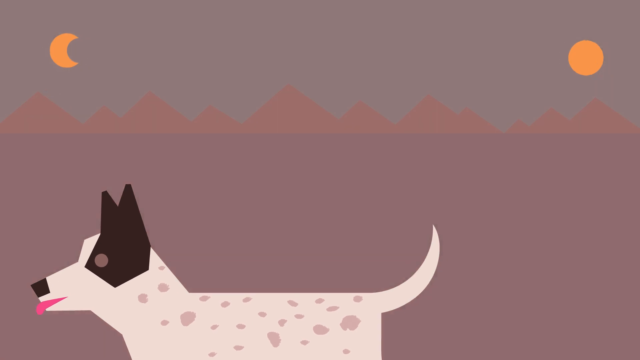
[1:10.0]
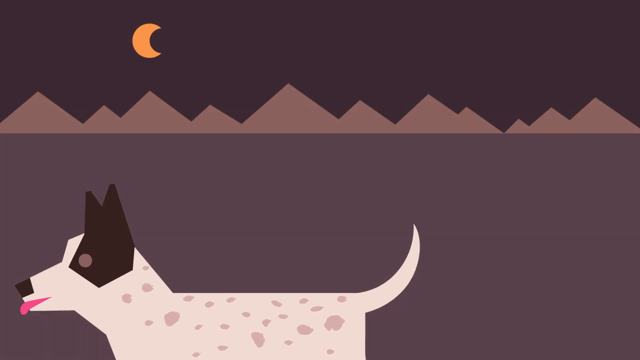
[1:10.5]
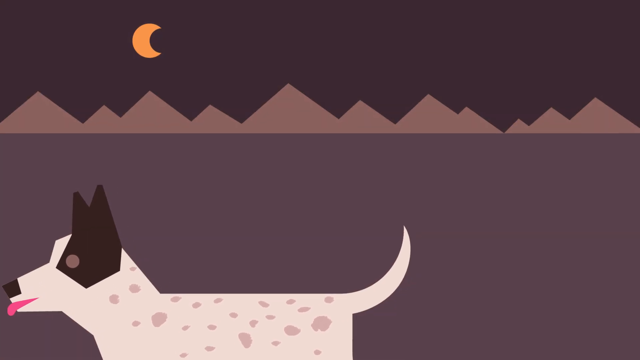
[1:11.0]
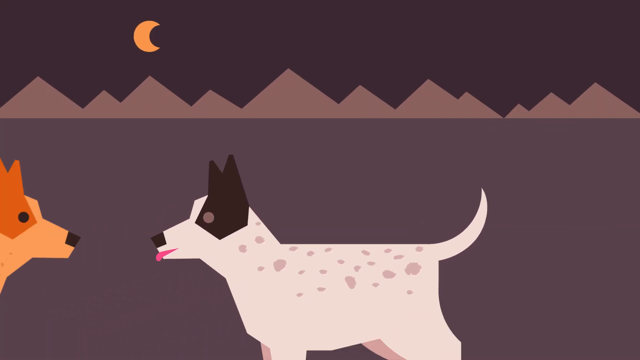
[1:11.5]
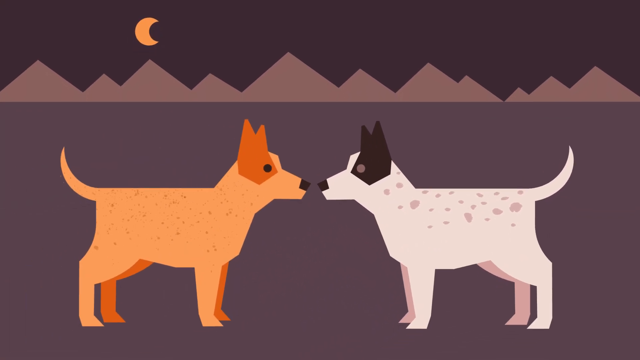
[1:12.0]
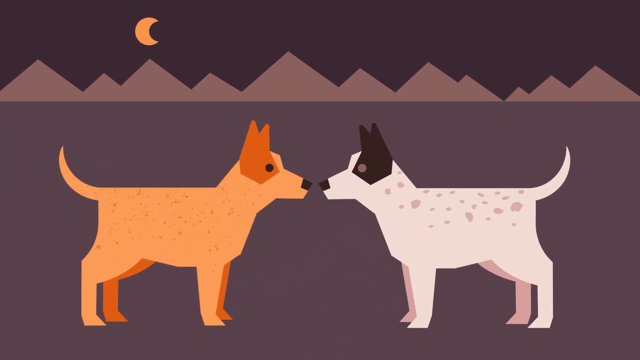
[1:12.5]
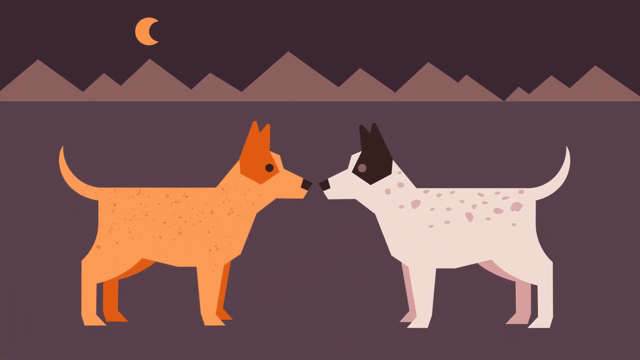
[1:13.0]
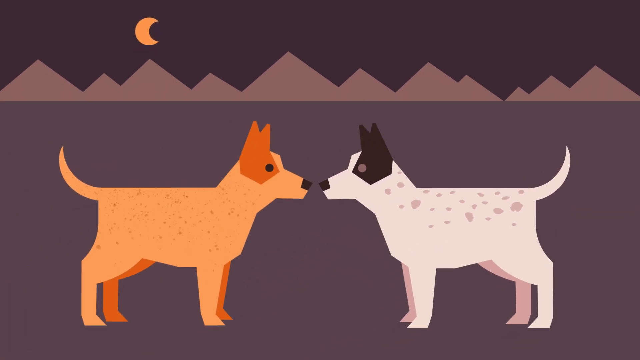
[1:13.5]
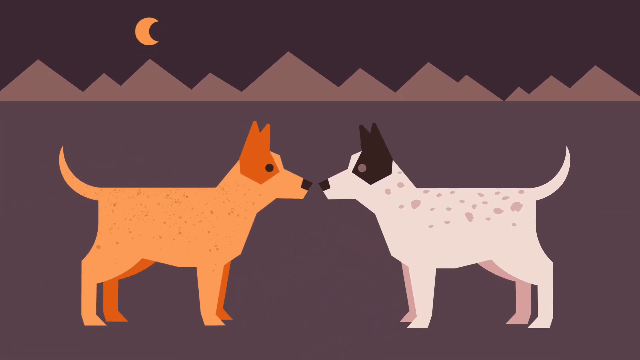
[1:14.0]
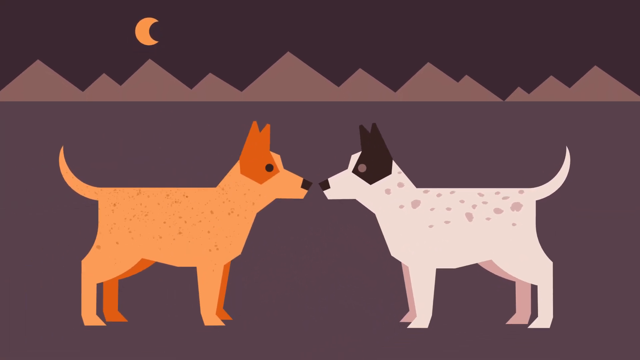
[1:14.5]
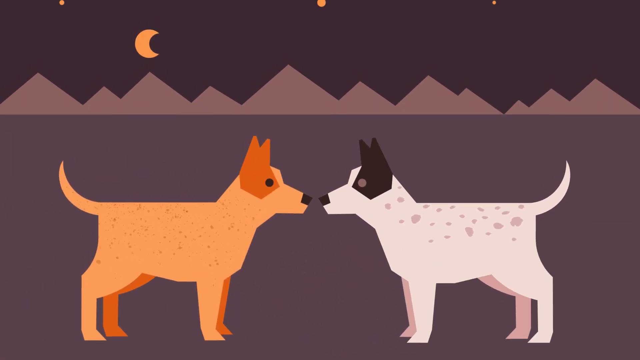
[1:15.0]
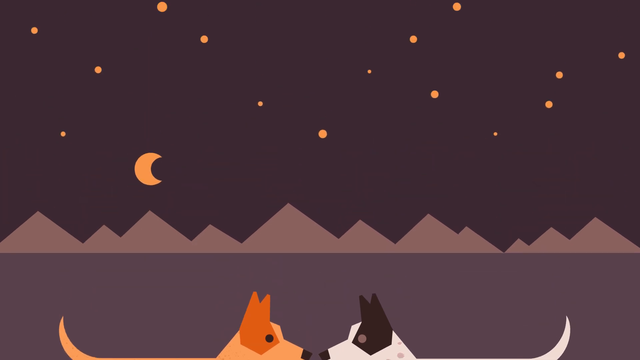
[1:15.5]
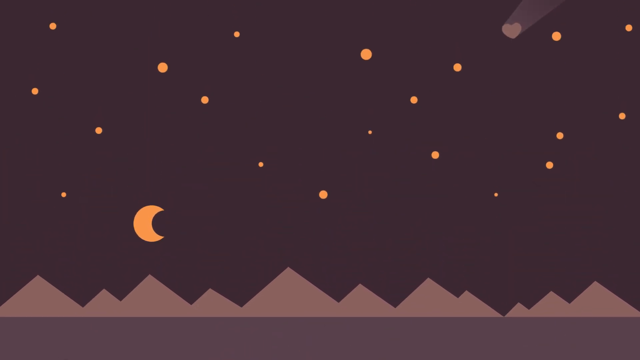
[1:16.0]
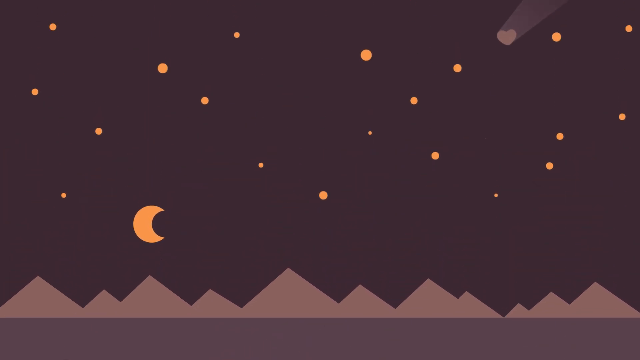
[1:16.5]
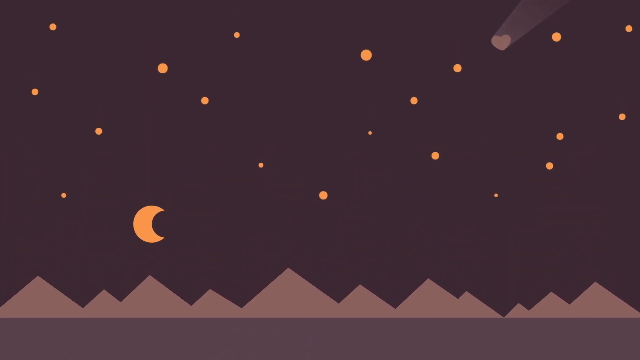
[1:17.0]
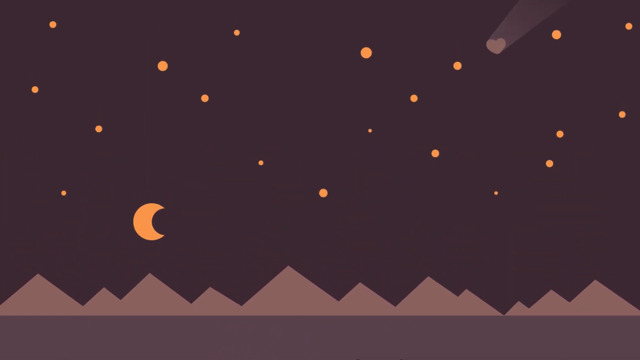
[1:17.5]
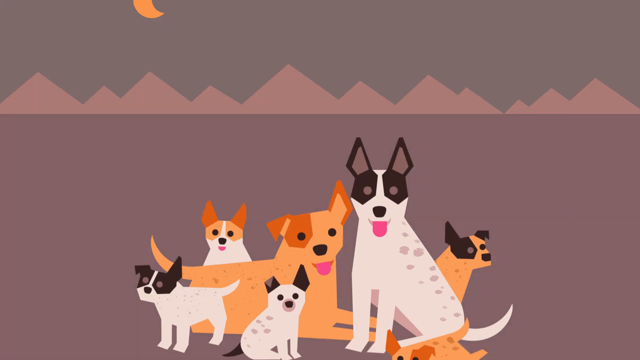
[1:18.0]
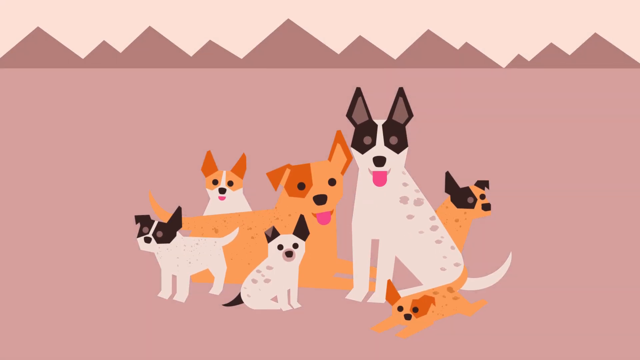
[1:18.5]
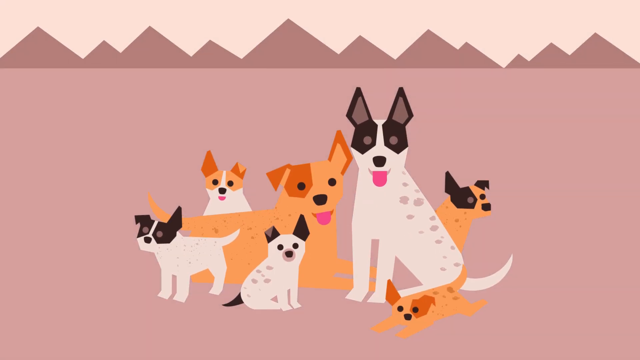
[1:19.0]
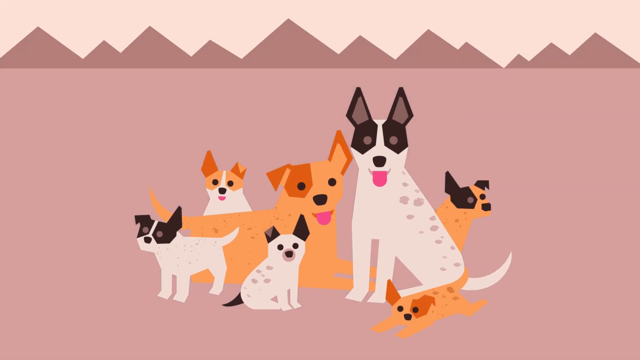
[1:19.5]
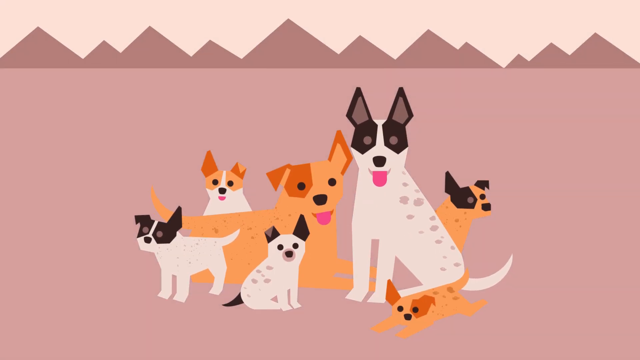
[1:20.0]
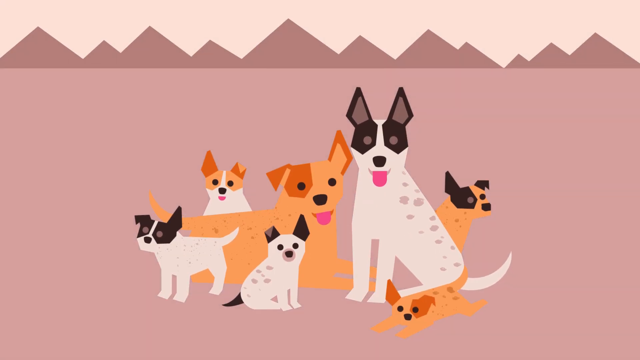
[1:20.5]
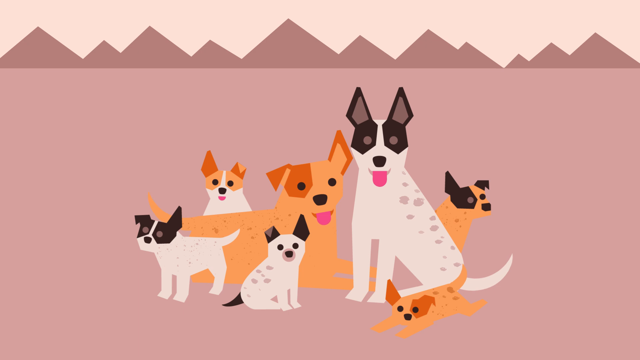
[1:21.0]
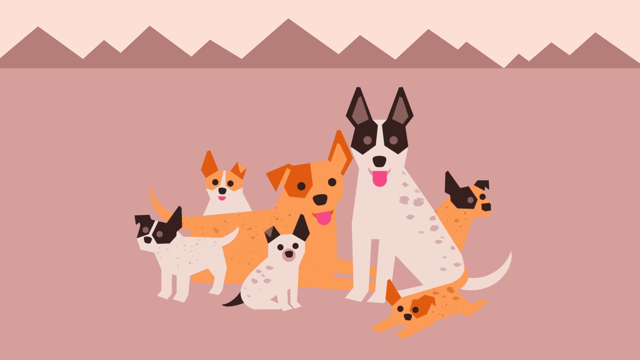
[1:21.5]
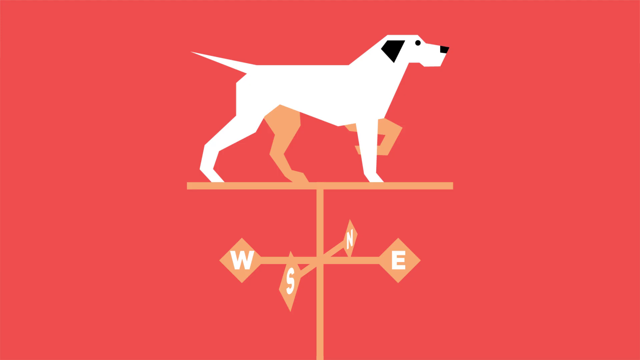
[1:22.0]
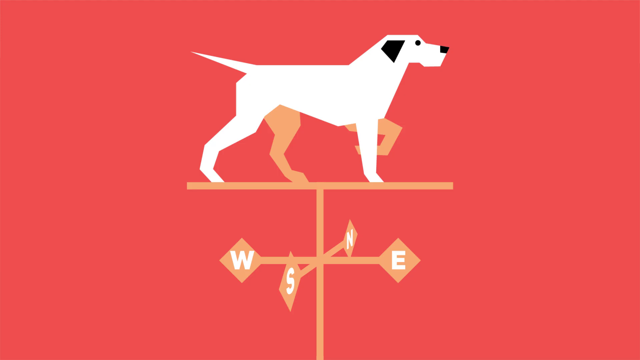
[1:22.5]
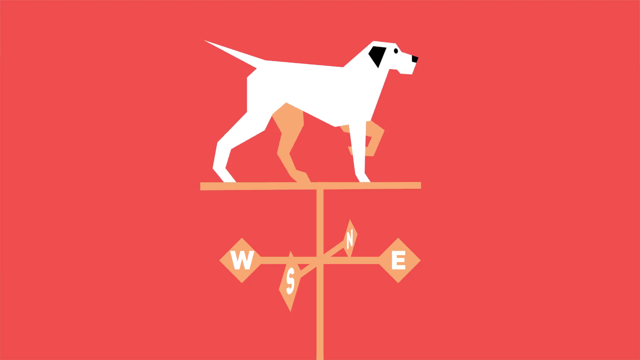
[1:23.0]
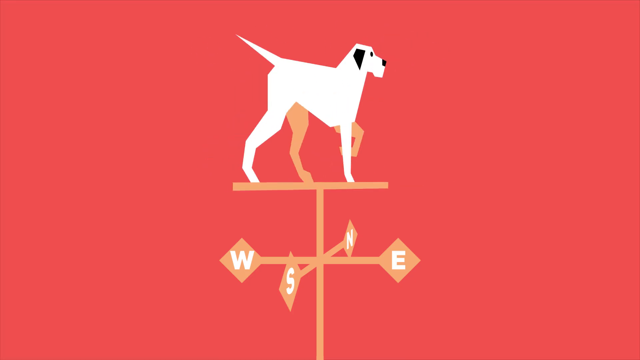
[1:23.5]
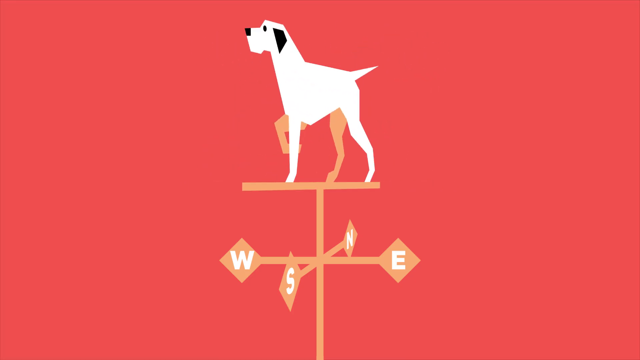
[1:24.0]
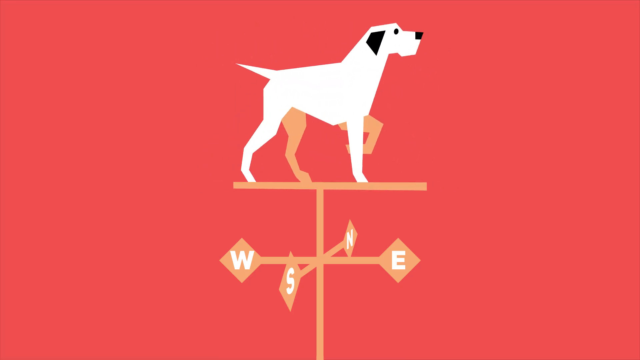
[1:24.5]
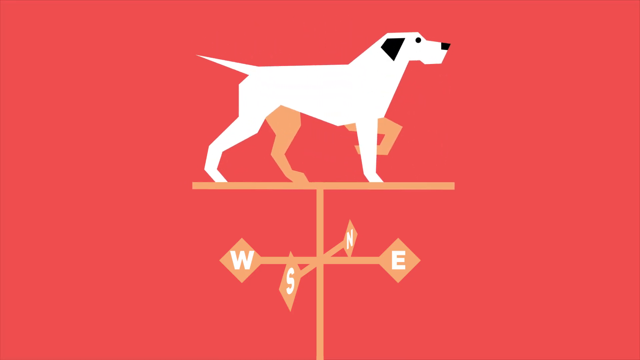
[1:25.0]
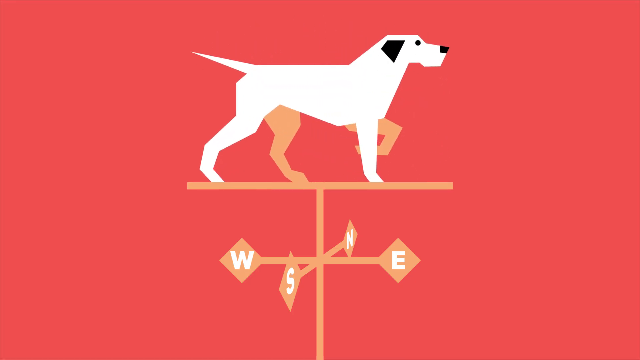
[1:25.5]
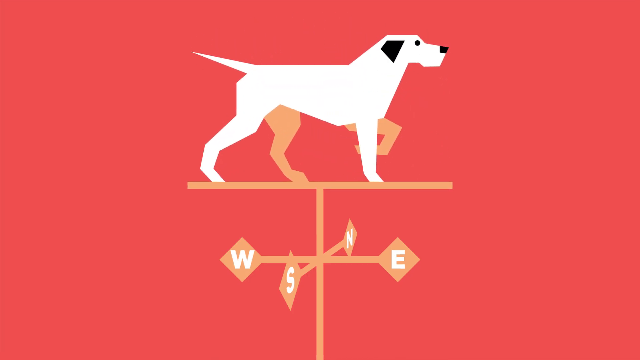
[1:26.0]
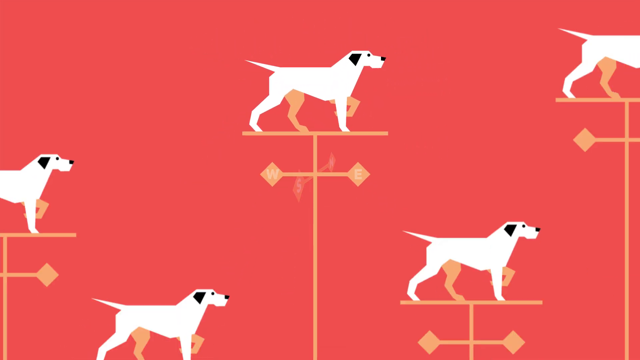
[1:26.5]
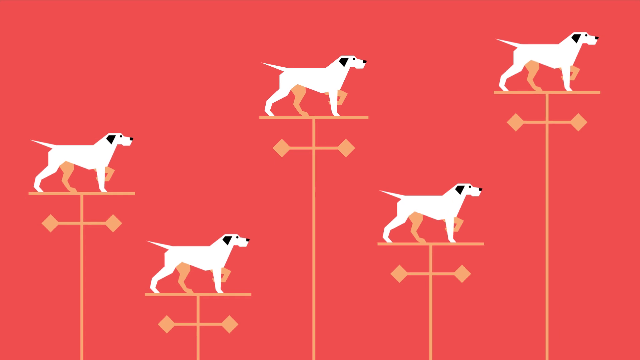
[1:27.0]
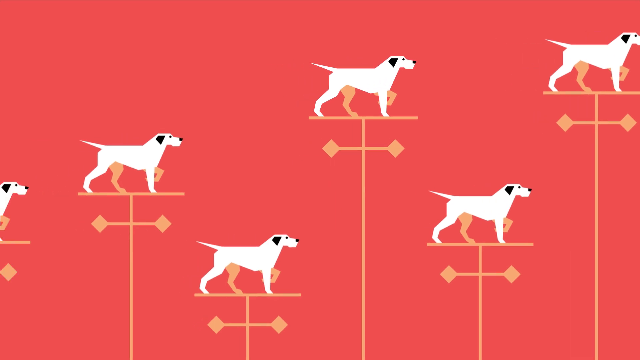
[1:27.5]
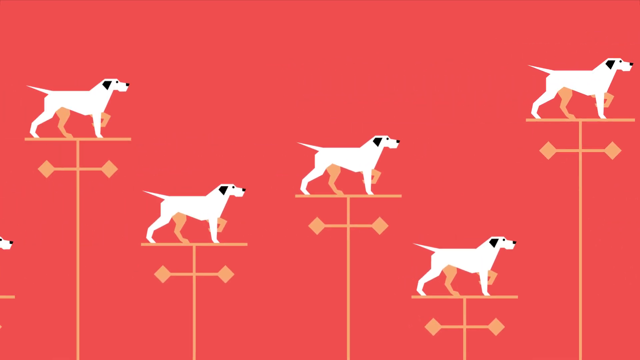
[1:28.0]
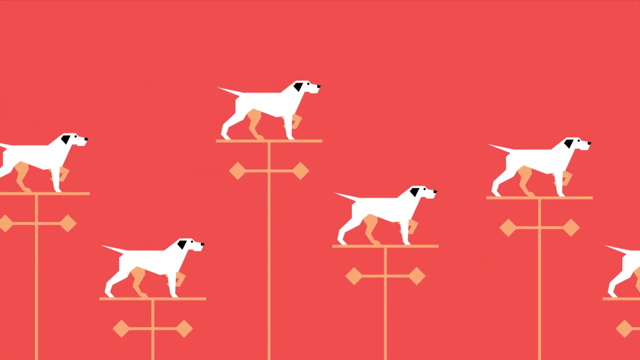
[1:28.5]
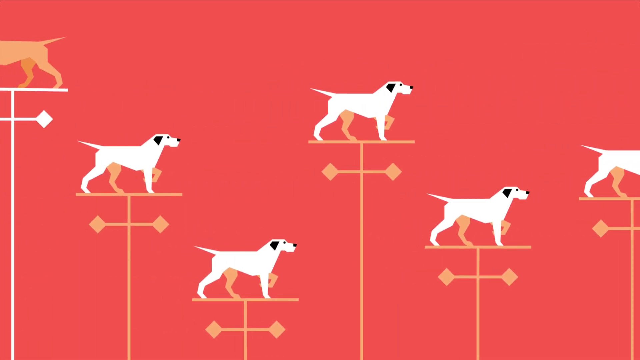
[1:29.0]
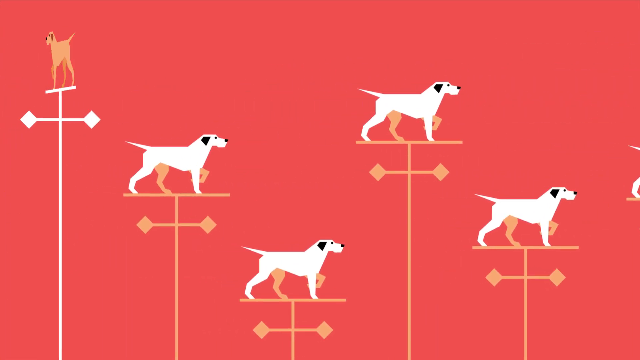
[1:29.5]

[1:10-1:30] A short-haired white dog with spots walks from the right side of the screen to the left. The top half of its head is a darker color, its ears are pointed, and its tongue is wagging out of its snout as it looks forward. The outdoor scene has a series of mountains in the background. A day-night cycle plays out: it begins in daytime with the sun near the center right of the screen, then rotates to night as the moon appears on the left of the screen. The camera pans out to show a similar dog with tannish-brown coloring instead of white, looking toward the other dog that approached. The camera then zooms up toward a starry night sky with a heart comet crossing the screen, while a series of other dogs and puppies appear illustrated at the bottom of the screen over a period of time. The scene changes to a dog on a wind-positioning indicator, rotating around. The view zooms out to show a myriad of other dogs in the same situation.